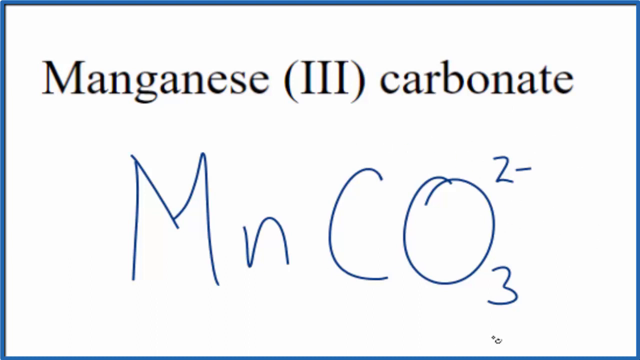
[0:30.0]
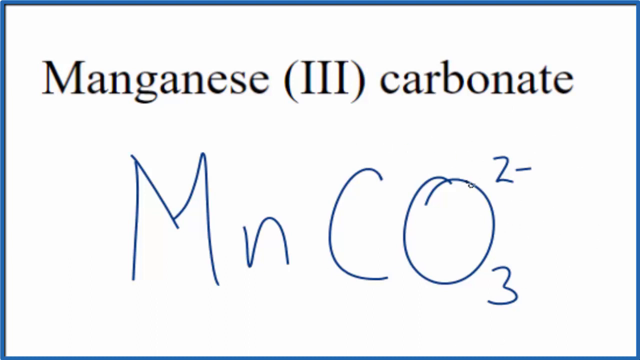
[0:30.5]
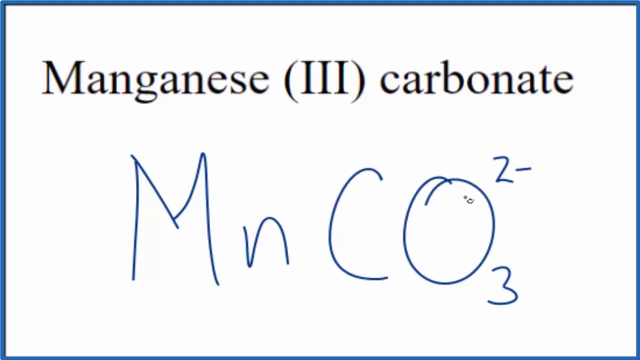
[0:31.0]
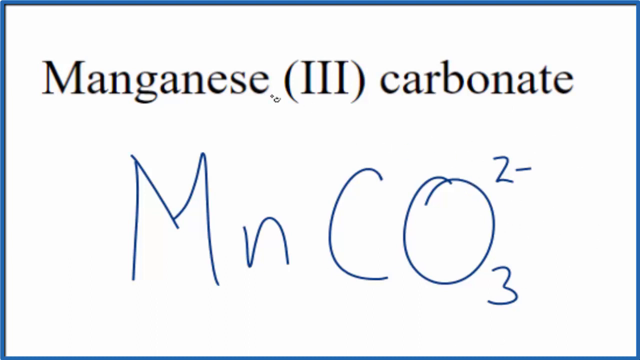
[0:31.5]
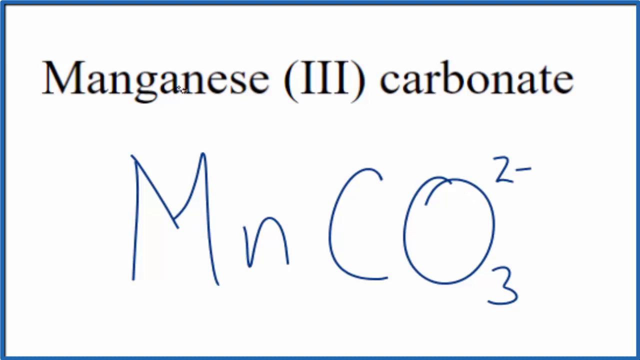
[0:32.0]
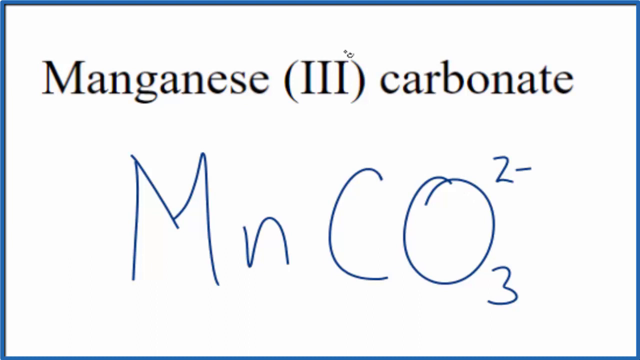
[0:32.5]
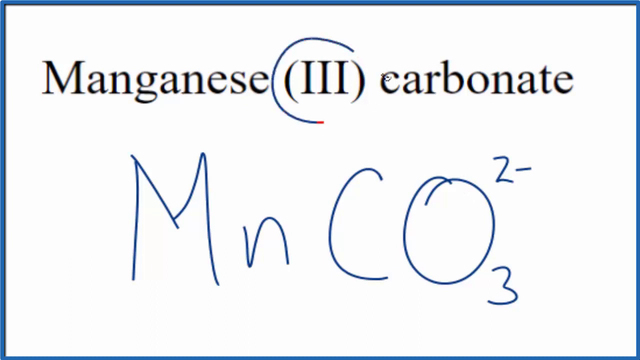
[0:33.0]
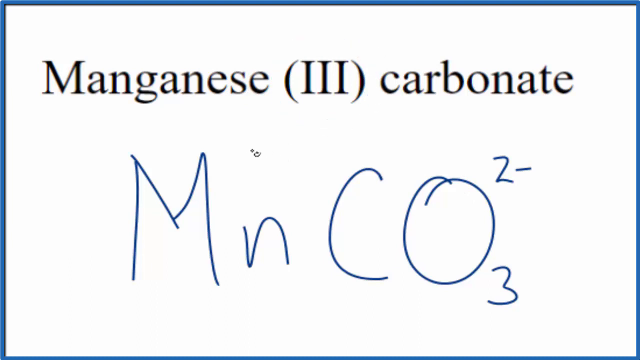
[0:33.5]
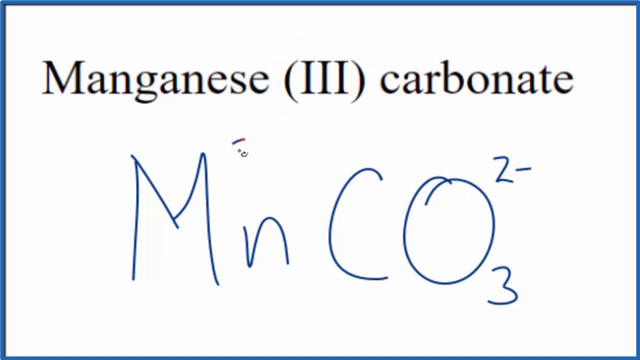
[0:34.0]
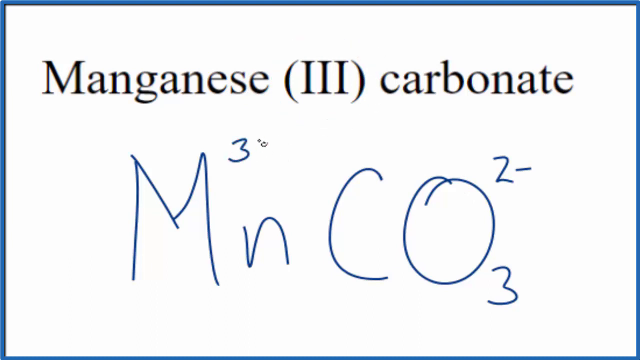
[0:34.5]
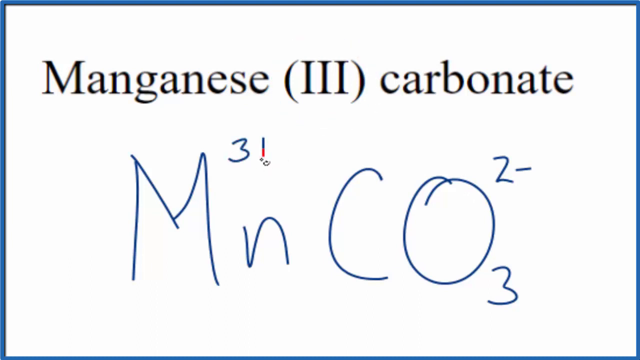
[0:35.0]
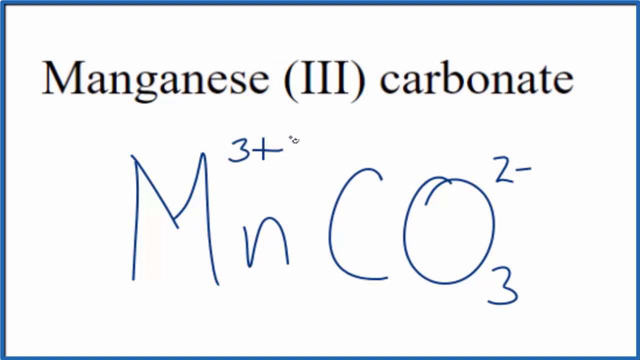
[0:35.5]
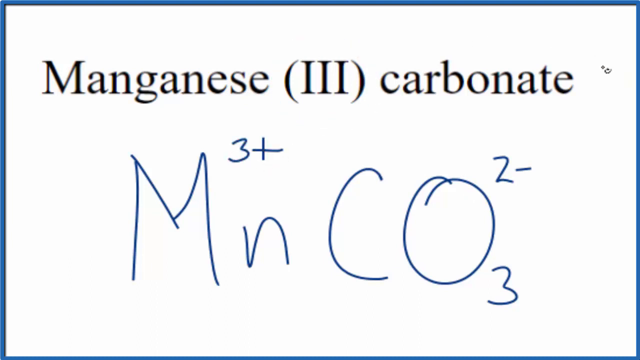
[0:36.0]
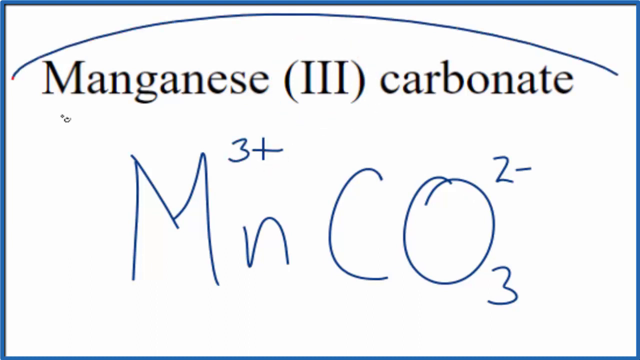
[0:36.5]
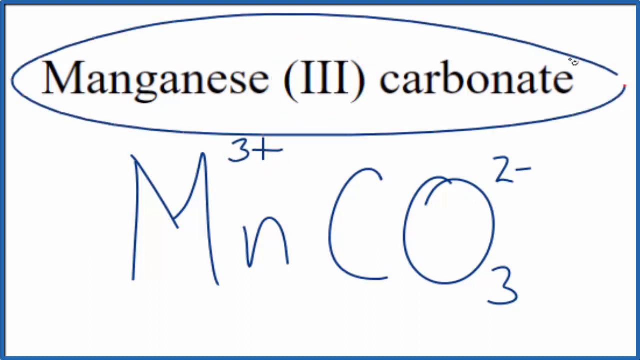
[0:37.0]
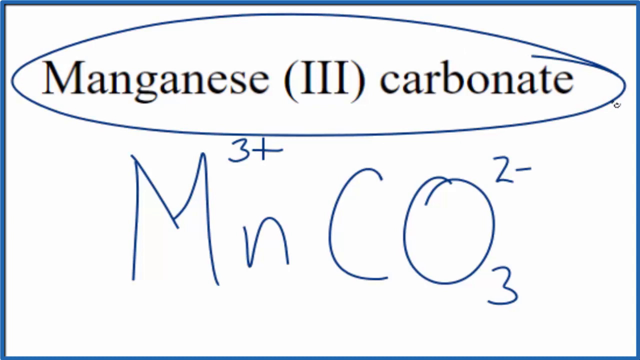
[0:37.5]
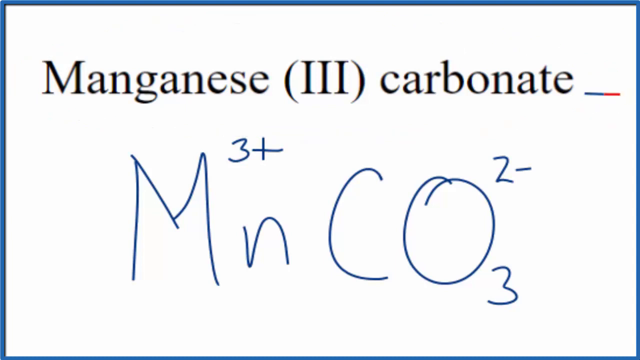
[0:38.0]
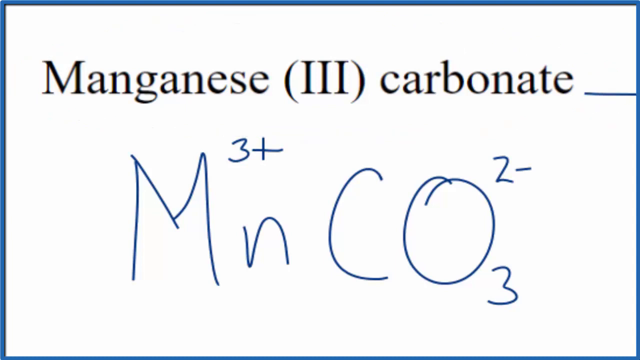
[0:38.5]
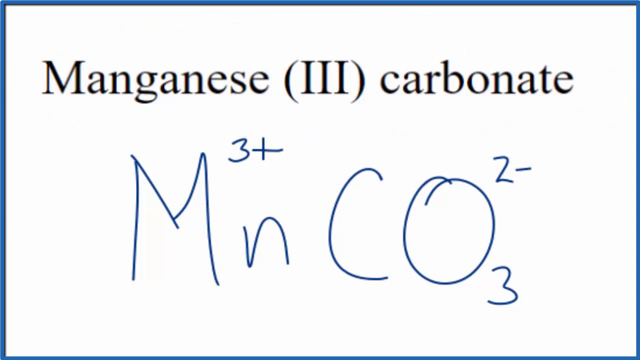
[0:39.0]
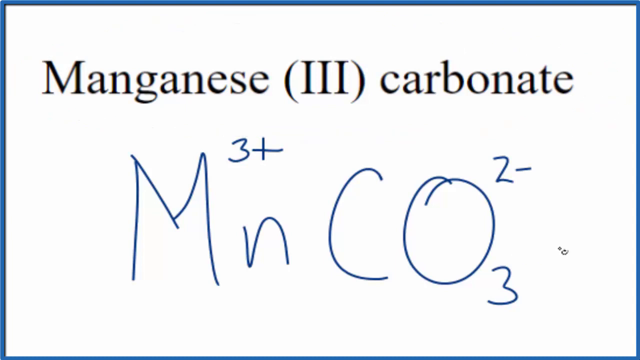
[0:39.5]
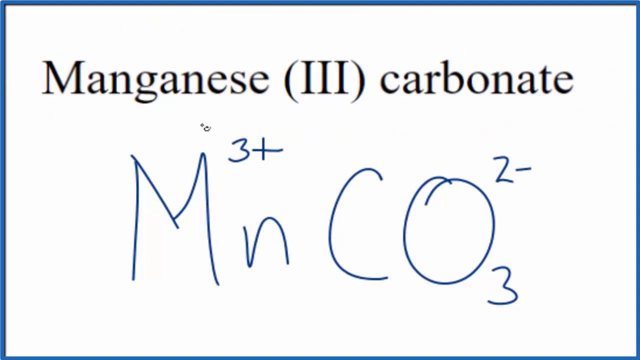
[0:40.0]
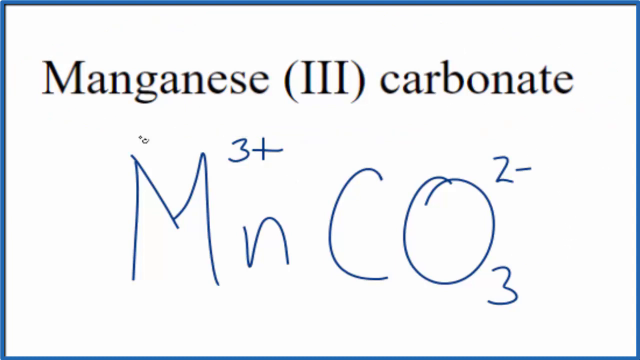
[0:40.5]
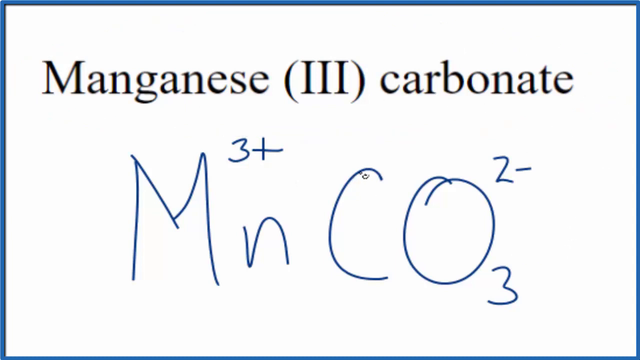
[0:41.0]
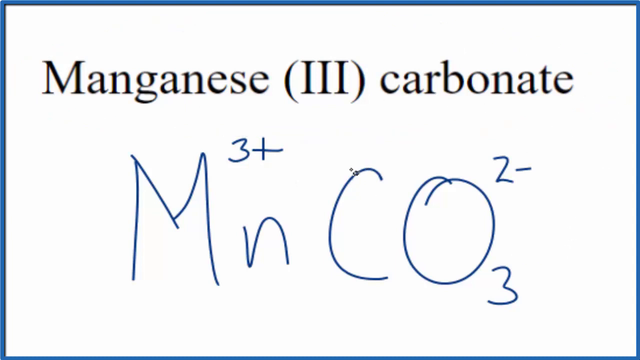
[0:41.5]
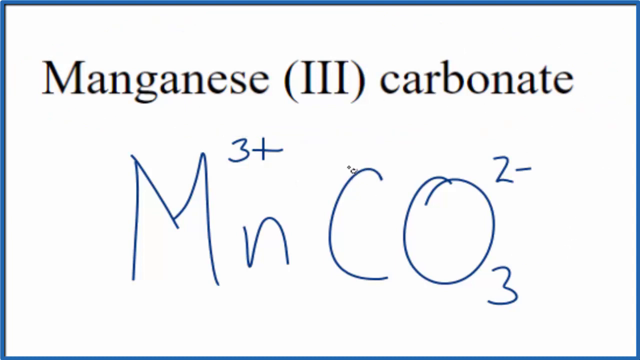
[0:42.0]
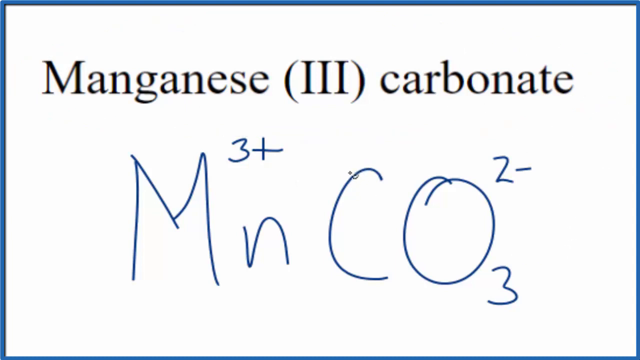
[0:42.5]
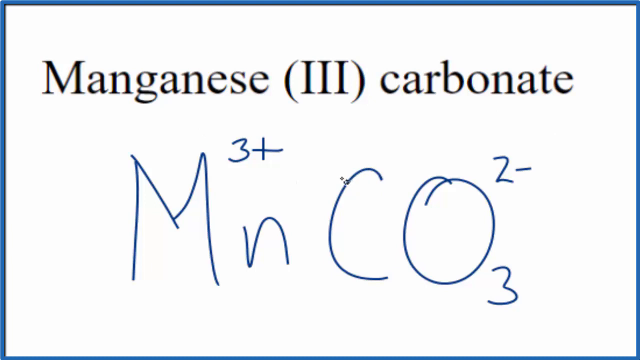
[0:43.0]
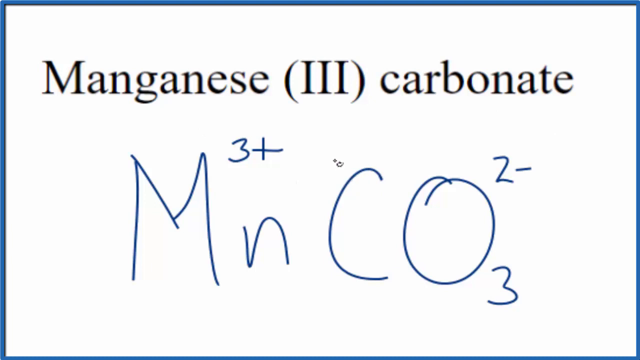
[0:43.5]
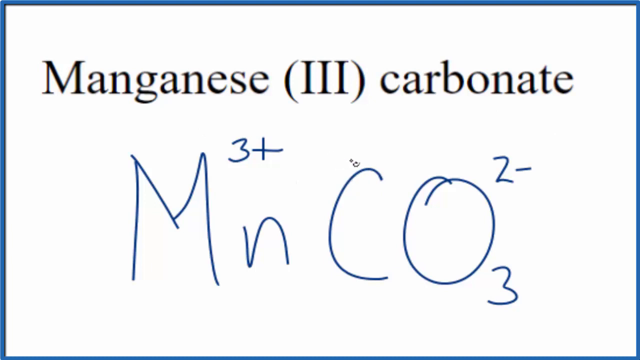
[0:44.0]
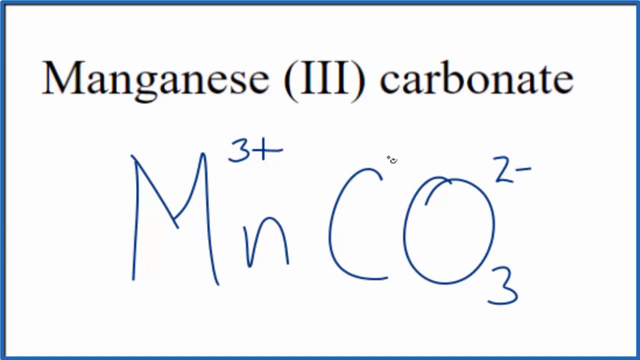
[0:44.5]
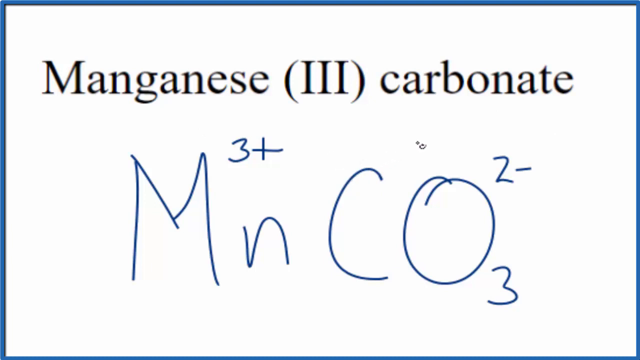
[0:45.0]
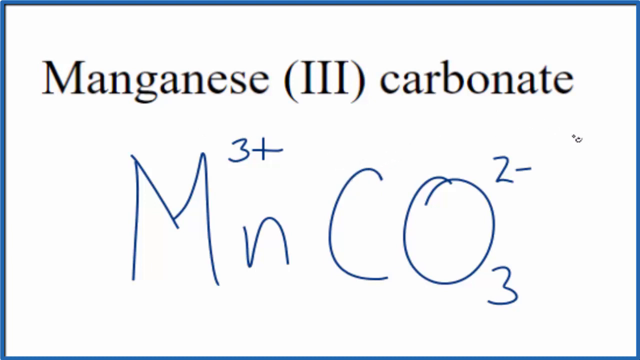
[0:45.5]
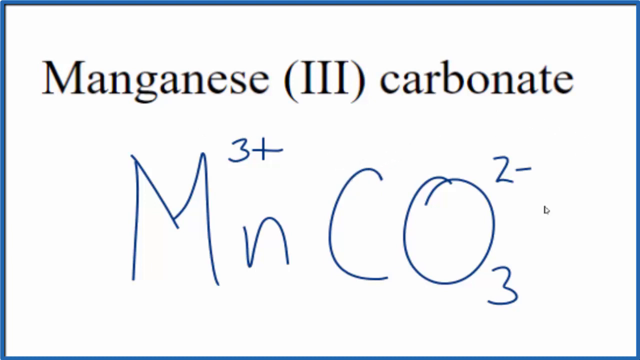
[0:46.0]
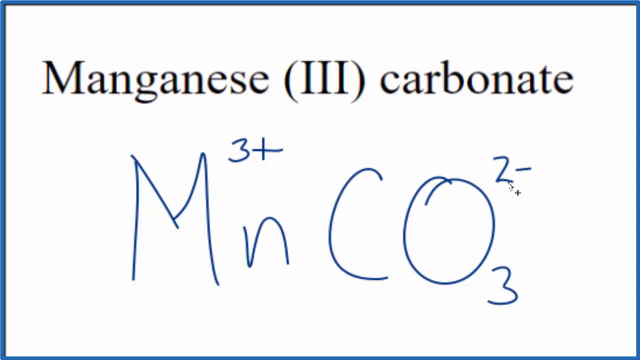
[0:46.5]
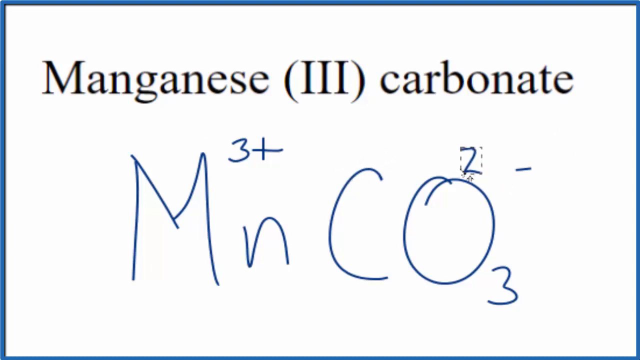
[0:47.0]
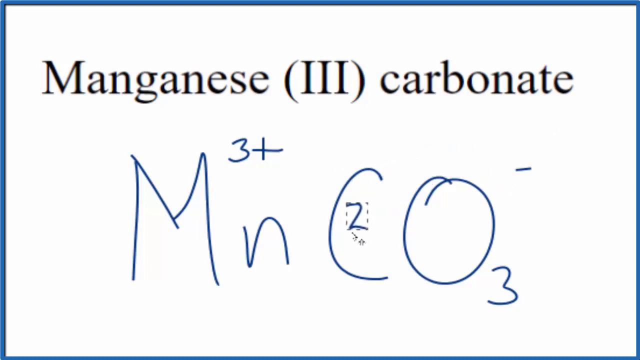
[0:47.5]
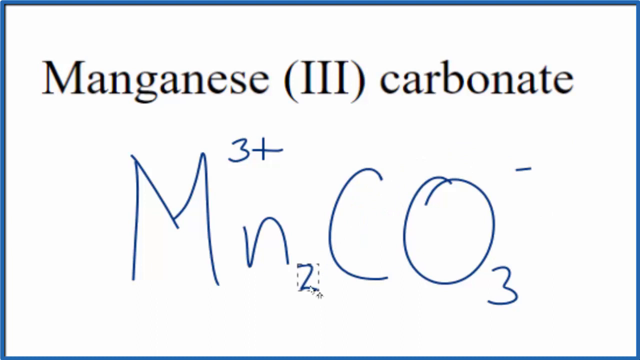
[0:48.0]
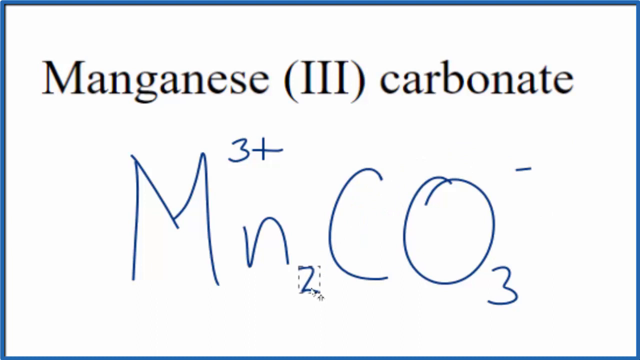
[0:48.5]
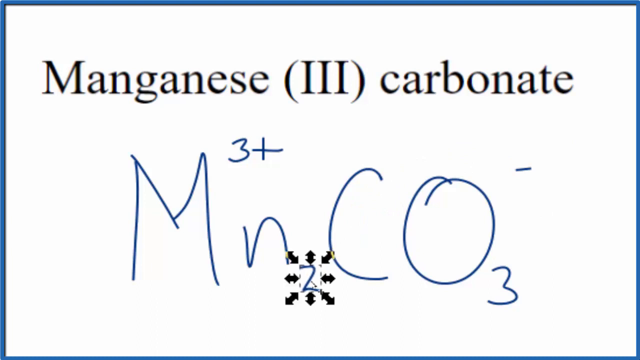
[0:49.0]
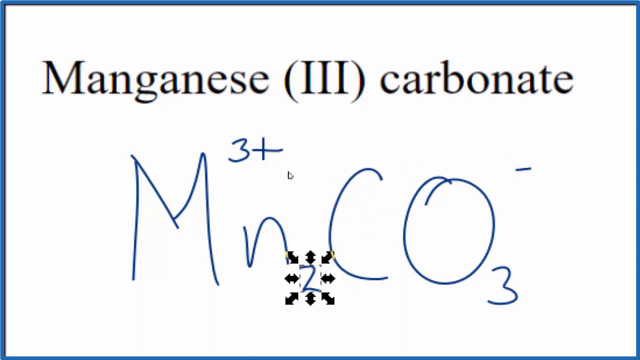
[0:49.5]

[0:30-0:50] The mouse pointer keeps moving around, and the Mn CO3 2- is still on the board. The Roman numeral III is circled, but the circle quickly goes away. Next to the M, on top of the n, a smaller "3+" is written. The whole "manganese (III) carbonate" is then circled, and that circle goes away. A line is drawn from the E to the end of the screen, and it also goes away. The pointer swishes all over the screen and then hovers by the C. The 2 that was on top of the O is taken away, leaving the negative sign, and is brought to the bottom of the n. Several arrows then come out of it.